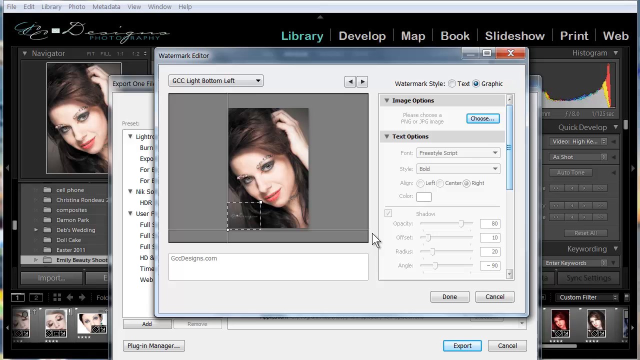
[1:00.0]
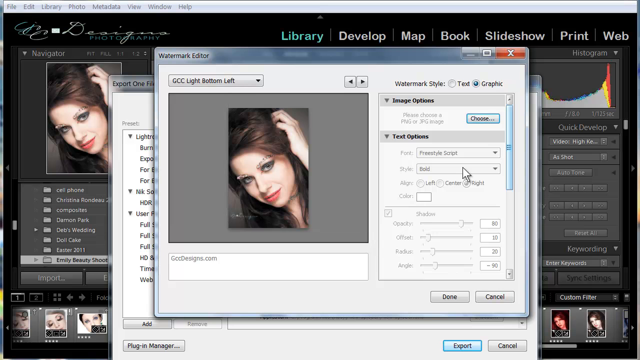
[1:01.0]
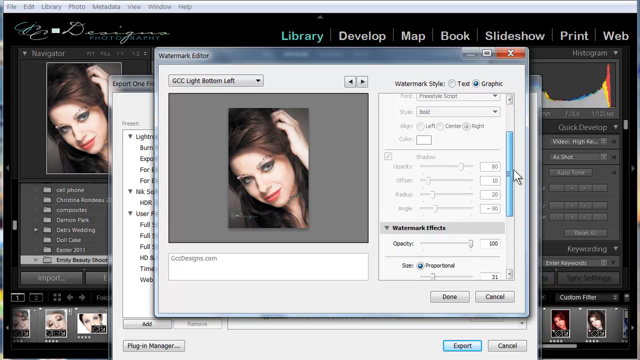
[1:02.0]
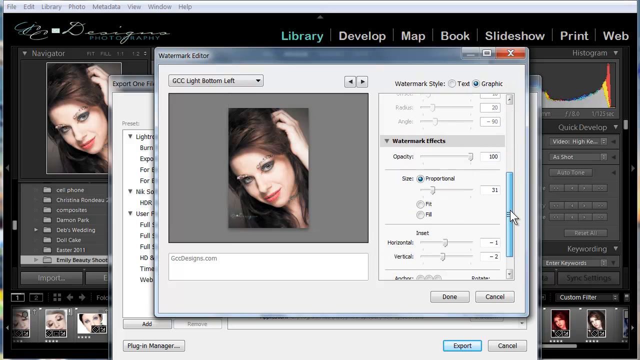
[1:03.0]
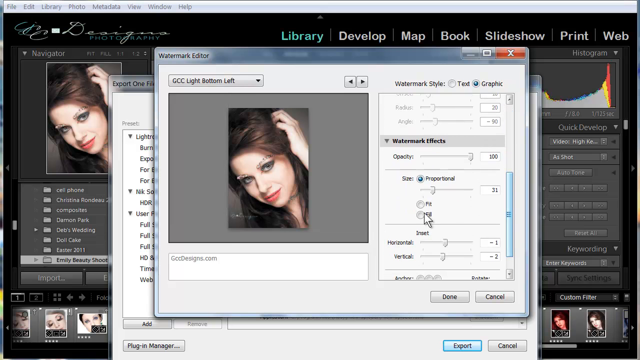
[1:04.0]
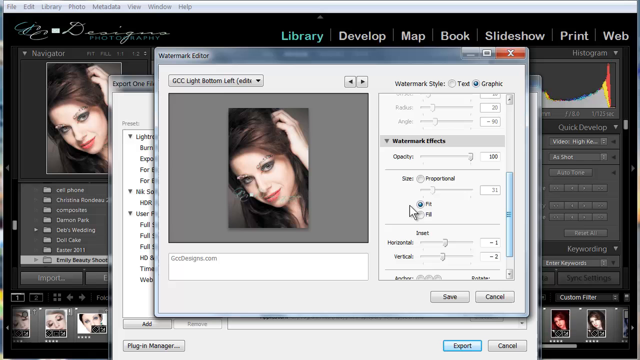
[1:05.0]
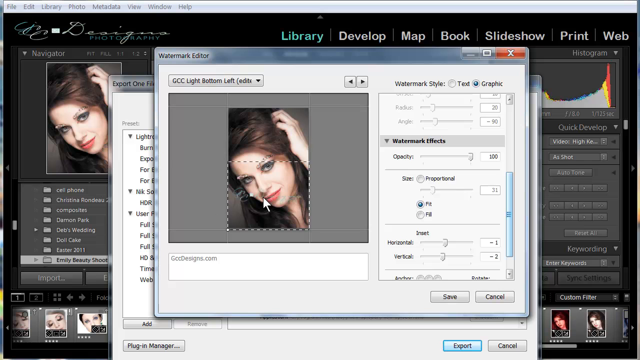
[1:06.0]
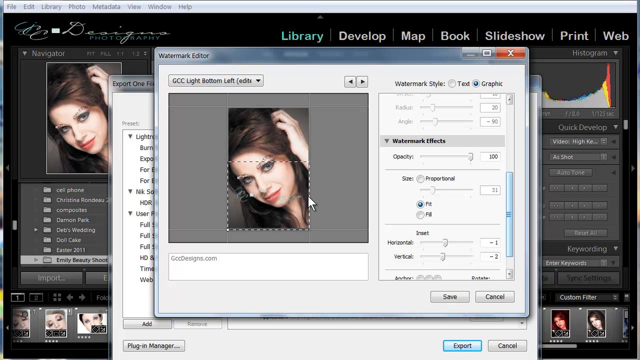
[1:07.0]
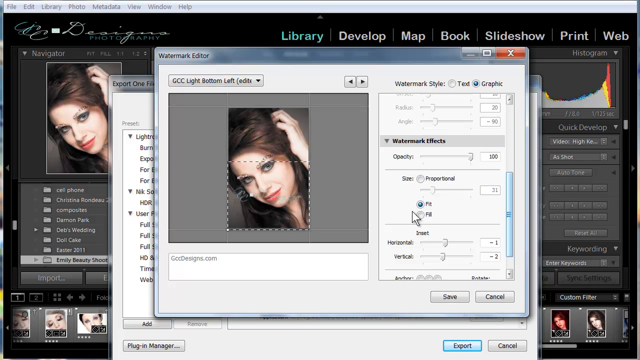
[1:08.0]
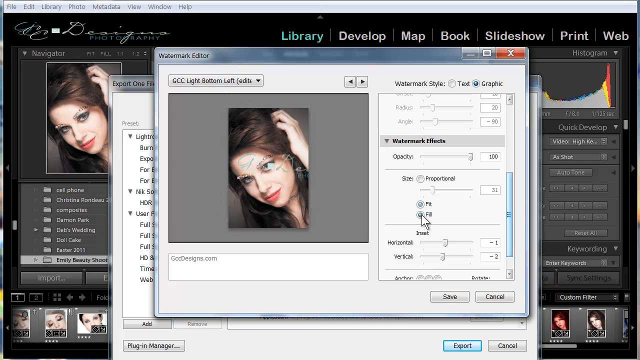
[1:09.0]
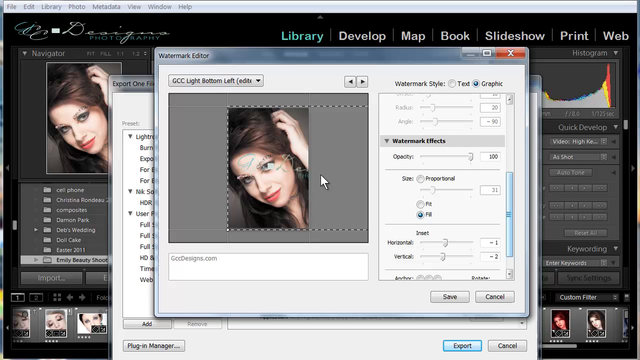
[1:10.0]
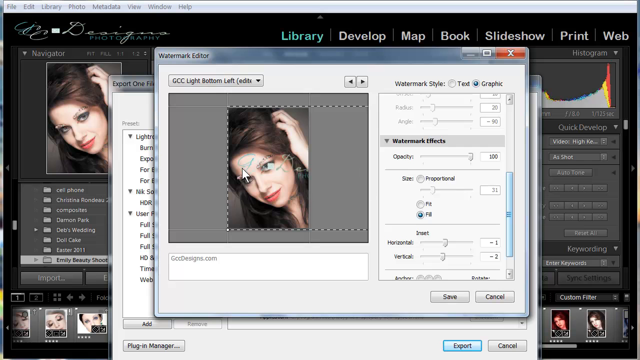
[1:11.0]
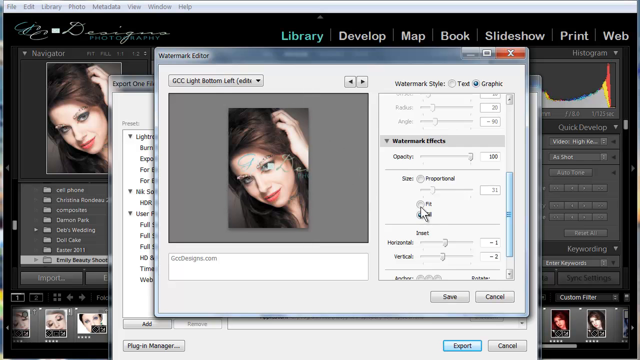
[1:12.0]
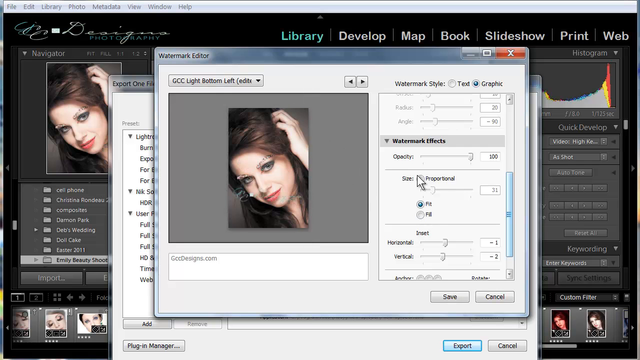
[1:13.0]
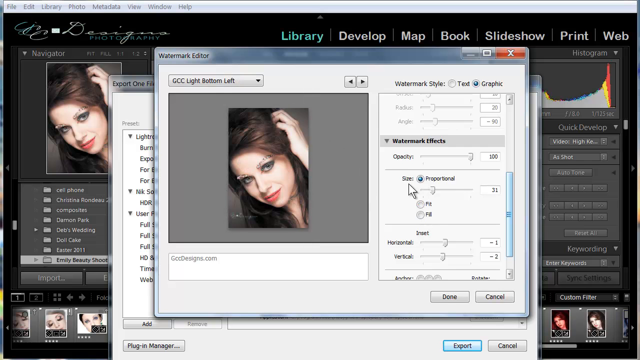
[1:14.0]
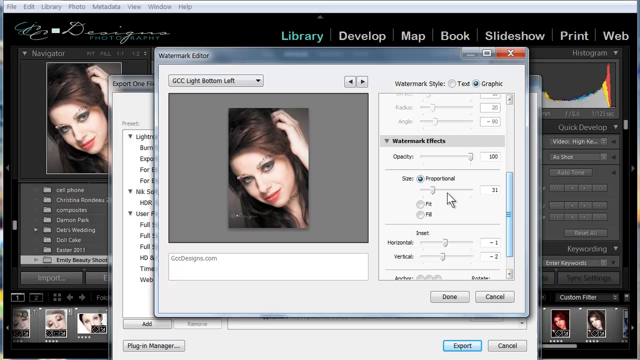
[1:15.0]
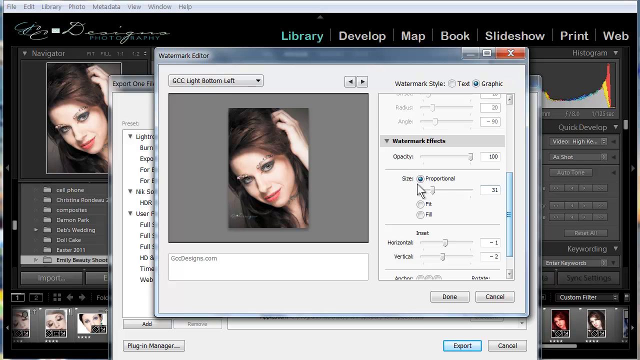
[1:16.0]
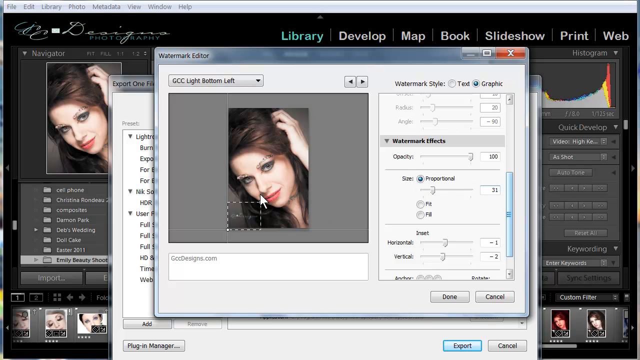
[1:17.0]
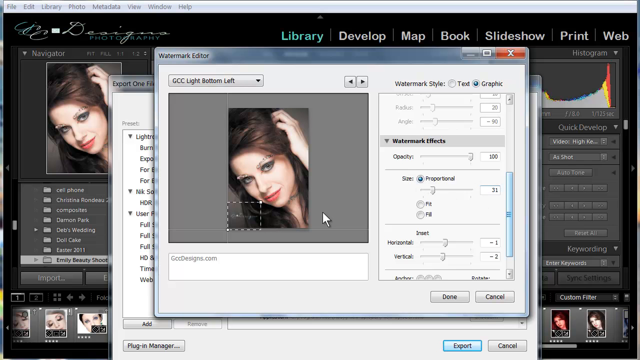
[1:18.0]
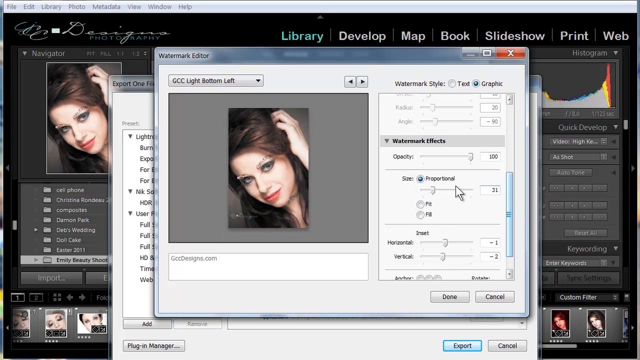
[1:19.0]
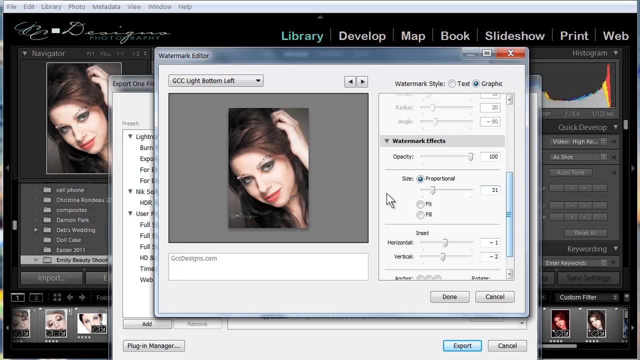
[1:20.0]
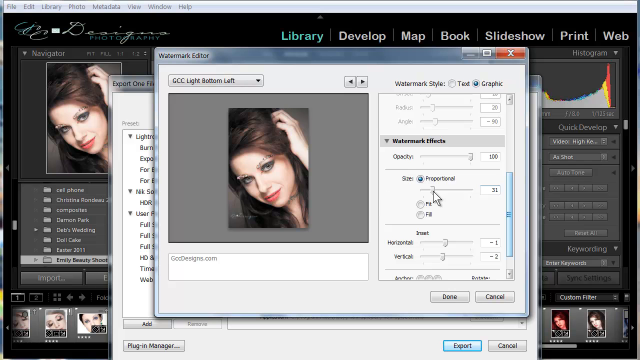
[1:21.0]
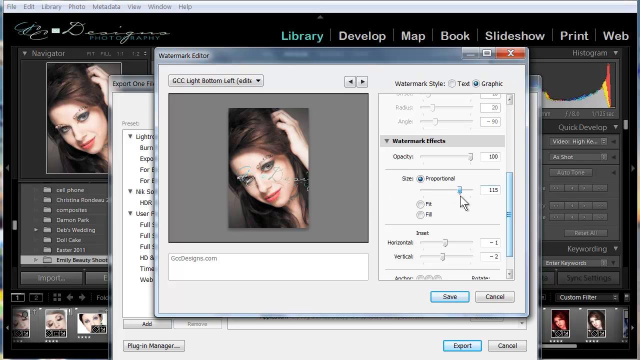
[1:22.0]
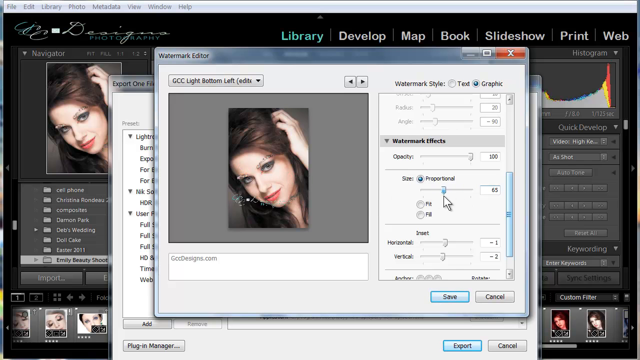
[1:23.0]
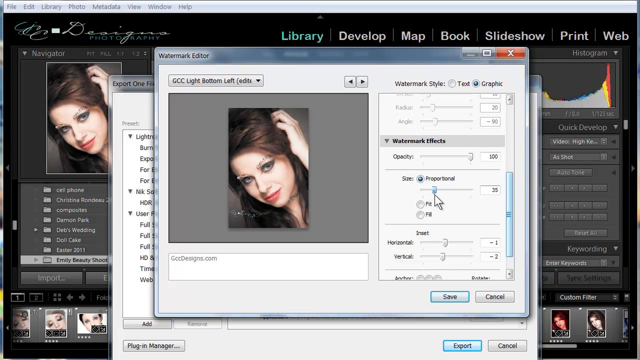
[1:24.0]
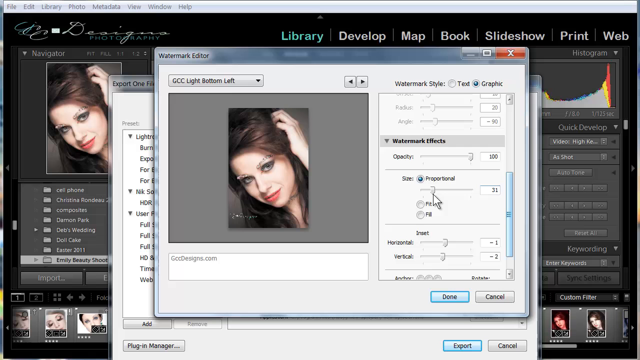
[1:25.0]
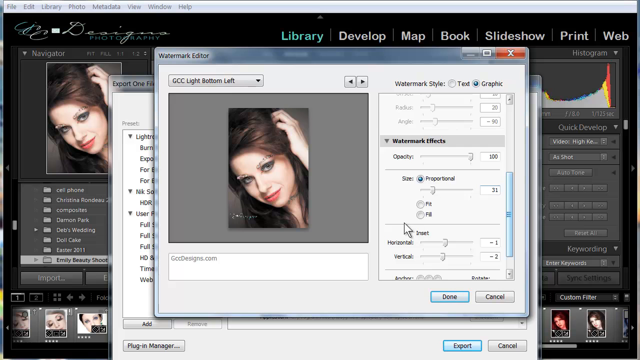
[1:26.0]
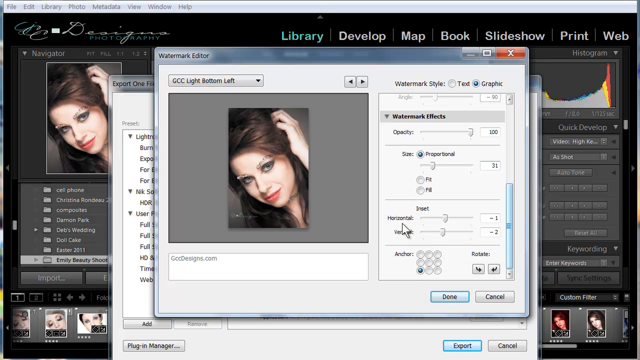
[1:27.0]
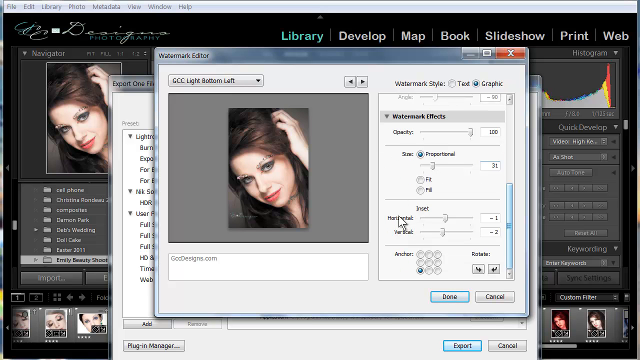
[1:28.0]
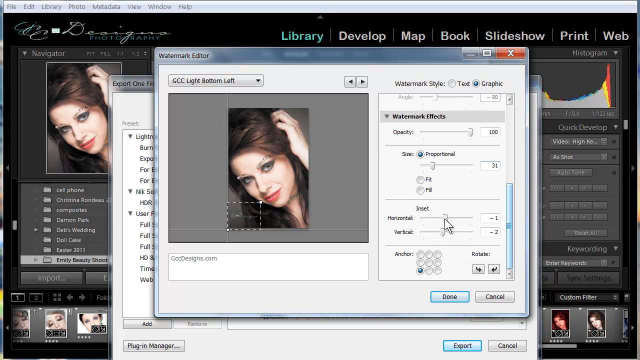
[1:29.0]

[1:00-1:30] The user scrolls through the list on the side of the watermark editor to a section called watermark effects. There, the opacity bar is dragged to 100, the maximum value, and the size option is set to proportional with a value of 31. The user clicks fit, then fill, back to fit, and back to proportional, trying out the settings. Fit drags the watermark across the woman's face; fill does roughly the same but seems to obscure the watermark more; proportional leaves it in the bottom corner where it was originally. The user then drags the proportional setting from left to right, increasing the size of the watermark across the image of the woman. Finally the user tries another setting that switches between horizontal and vertical.